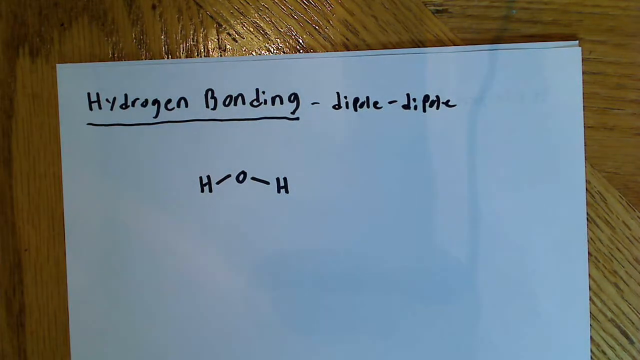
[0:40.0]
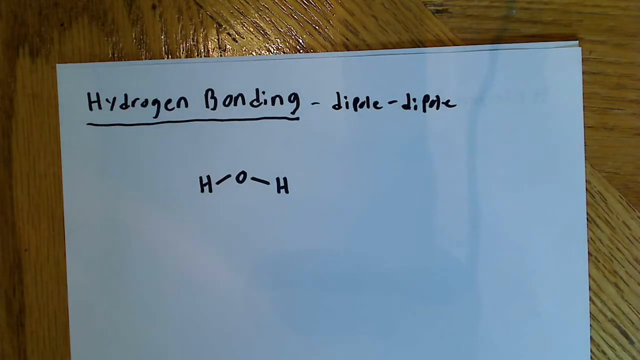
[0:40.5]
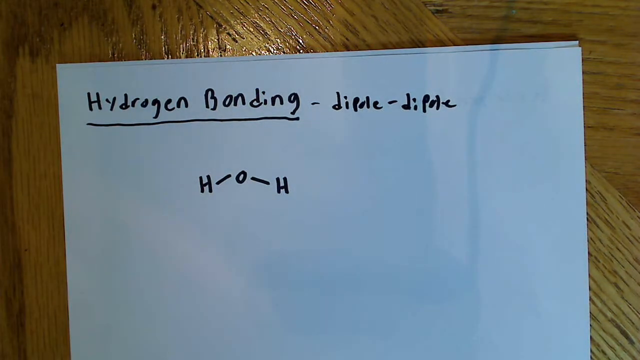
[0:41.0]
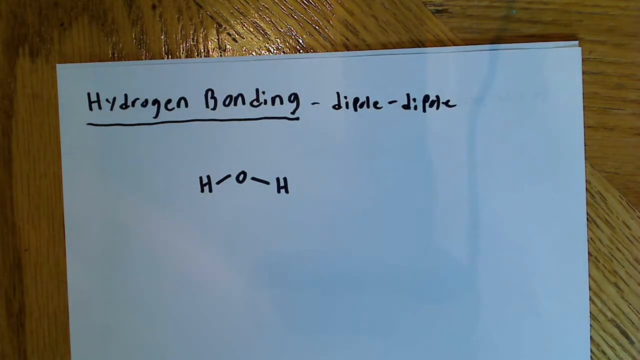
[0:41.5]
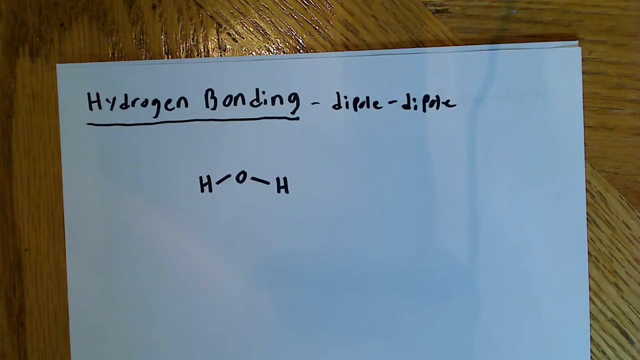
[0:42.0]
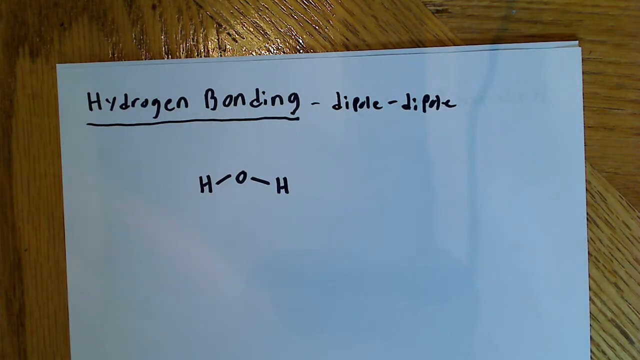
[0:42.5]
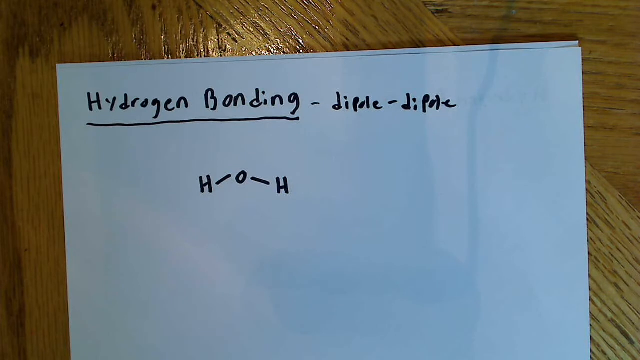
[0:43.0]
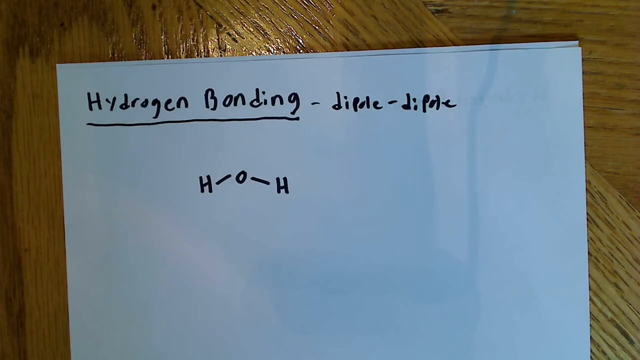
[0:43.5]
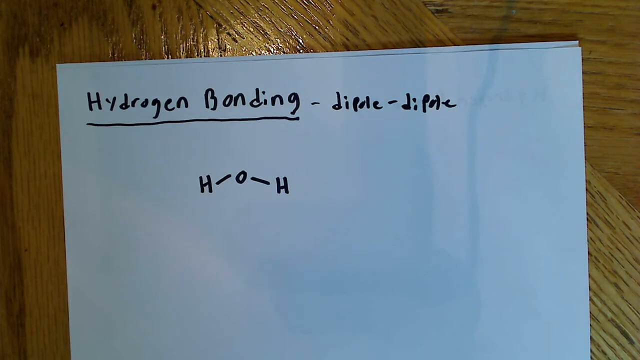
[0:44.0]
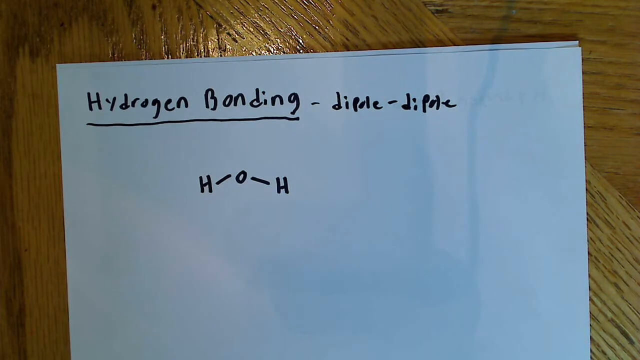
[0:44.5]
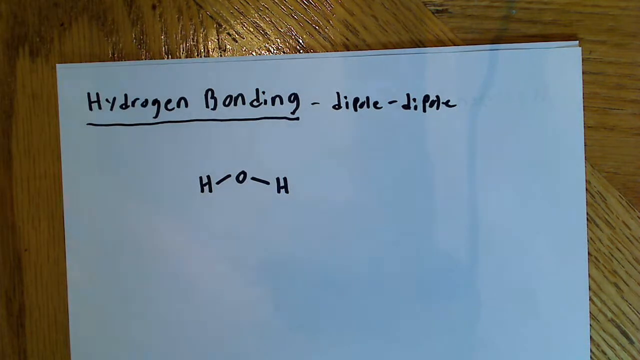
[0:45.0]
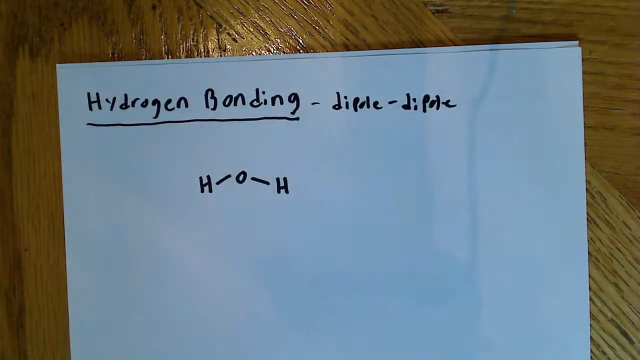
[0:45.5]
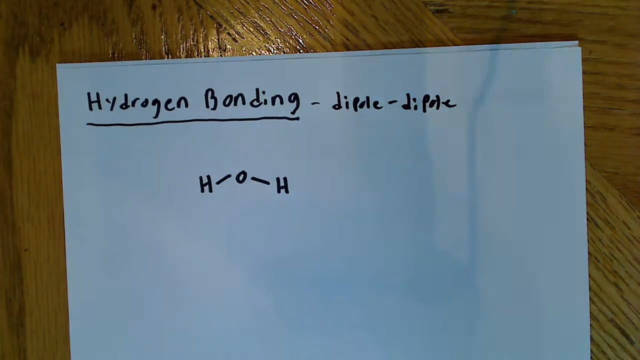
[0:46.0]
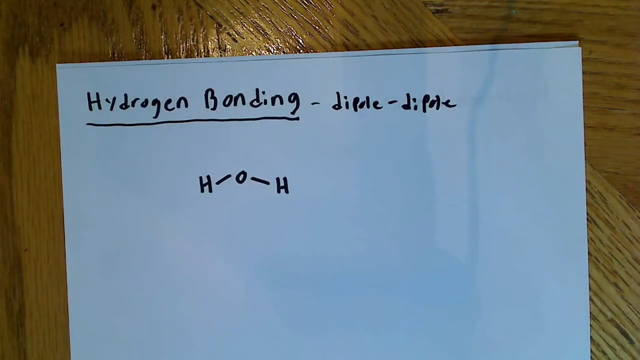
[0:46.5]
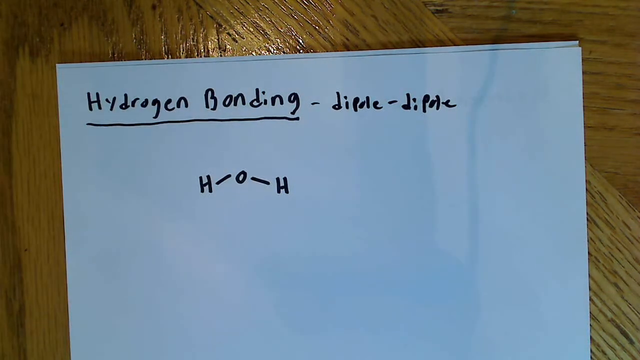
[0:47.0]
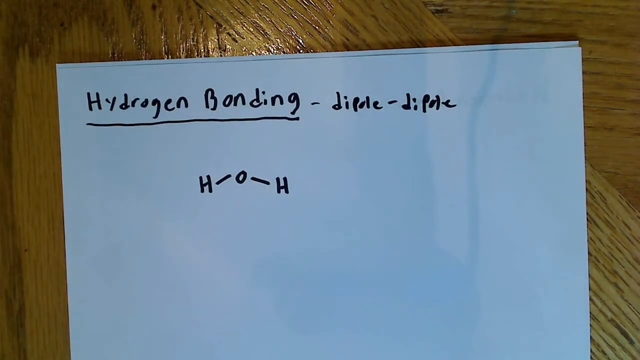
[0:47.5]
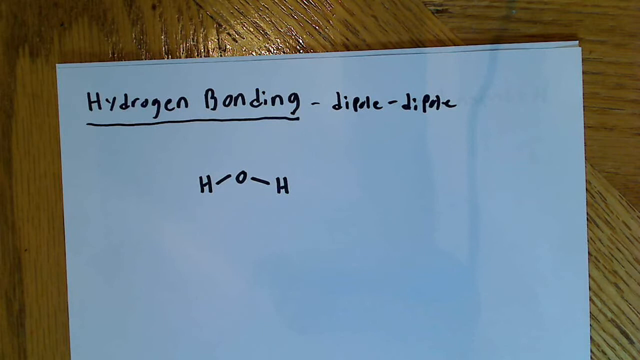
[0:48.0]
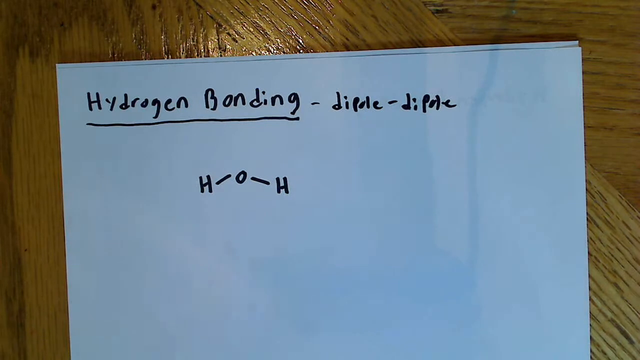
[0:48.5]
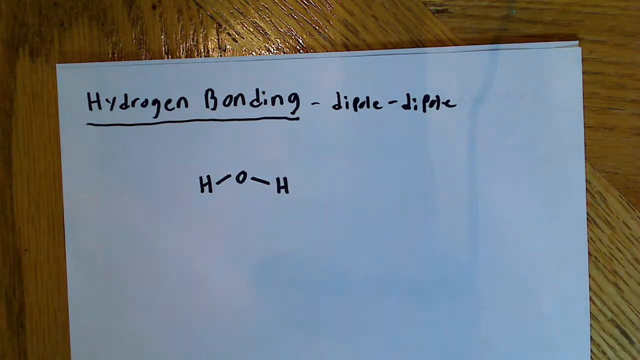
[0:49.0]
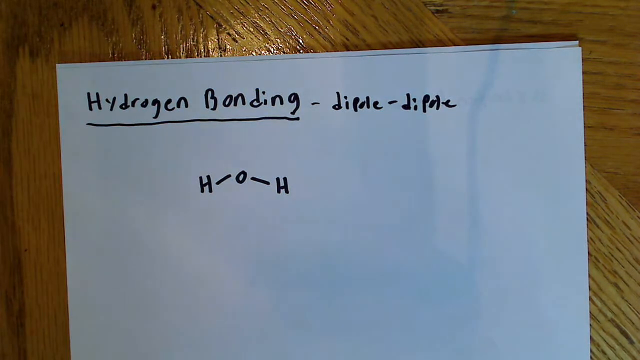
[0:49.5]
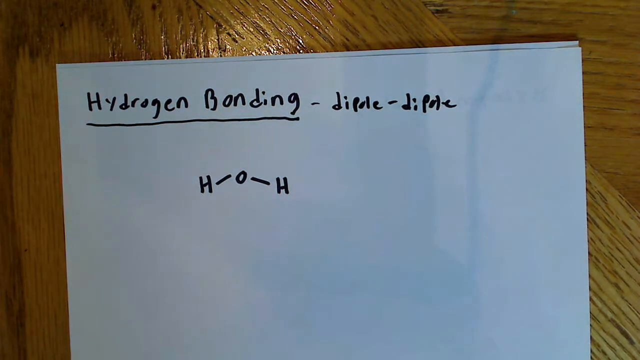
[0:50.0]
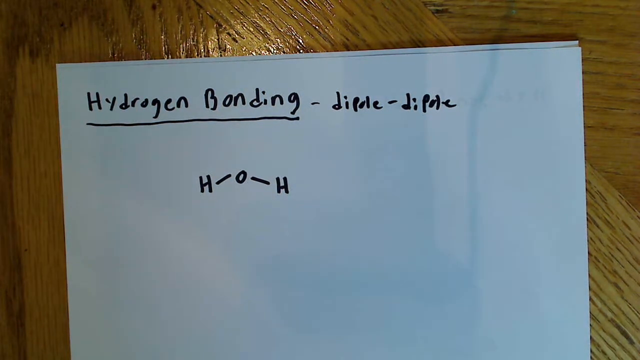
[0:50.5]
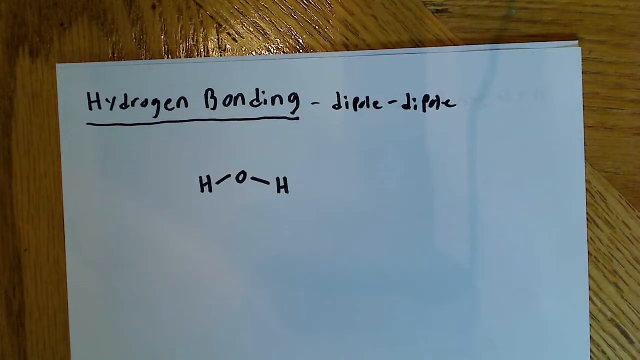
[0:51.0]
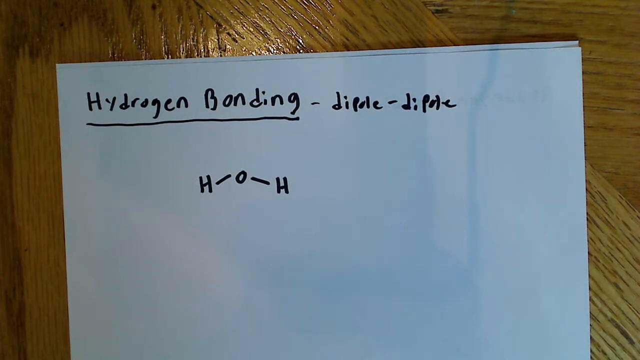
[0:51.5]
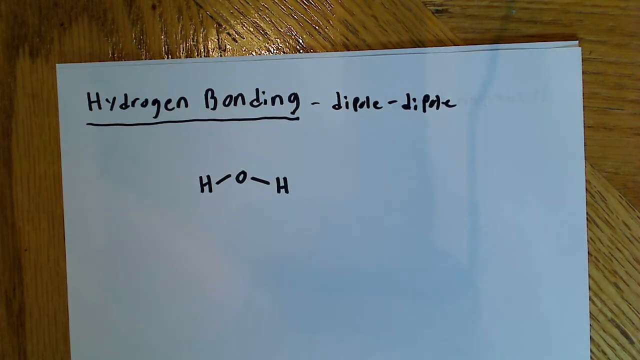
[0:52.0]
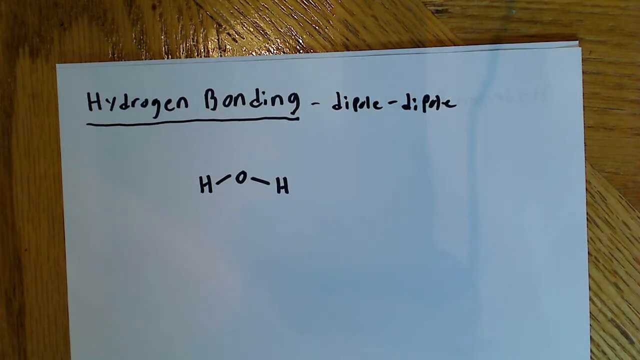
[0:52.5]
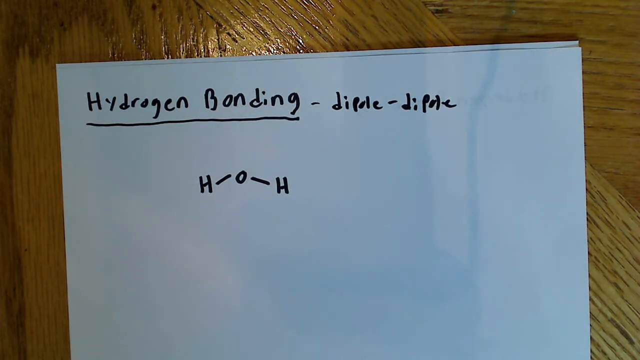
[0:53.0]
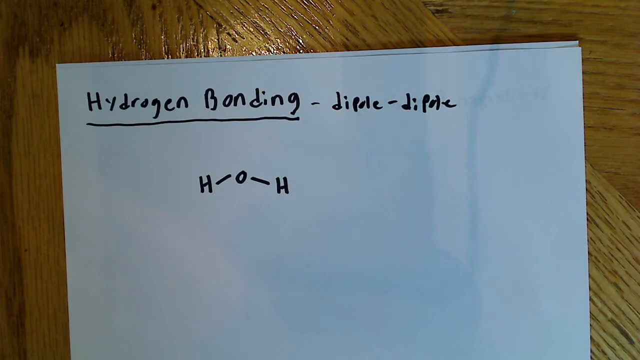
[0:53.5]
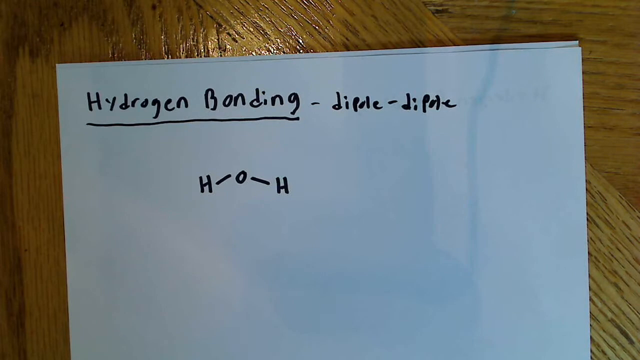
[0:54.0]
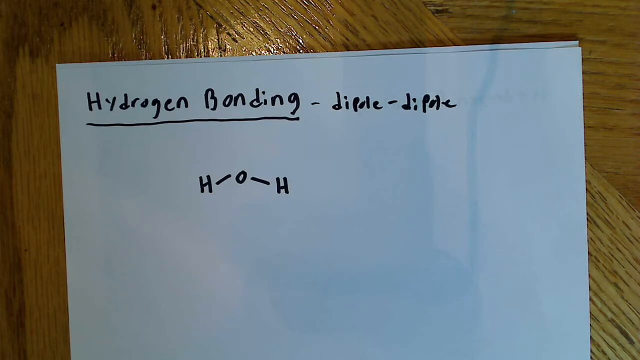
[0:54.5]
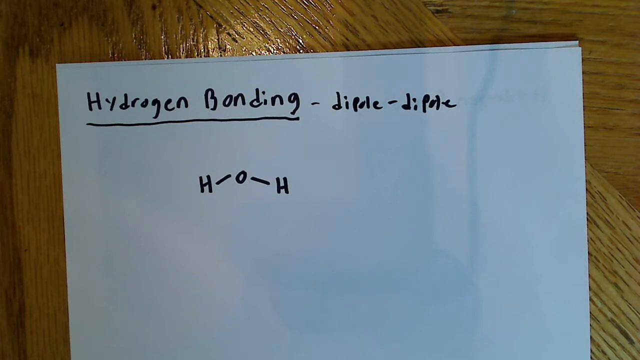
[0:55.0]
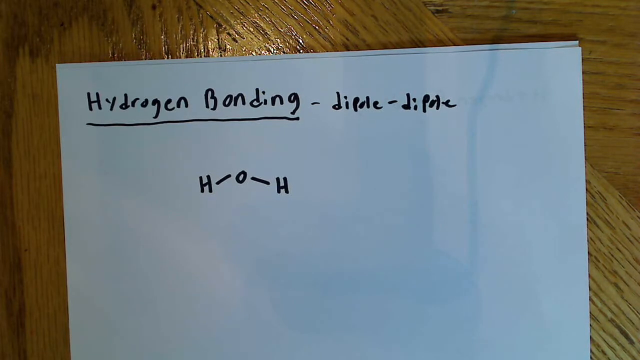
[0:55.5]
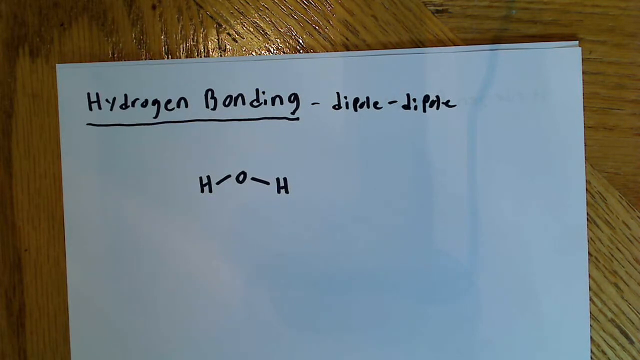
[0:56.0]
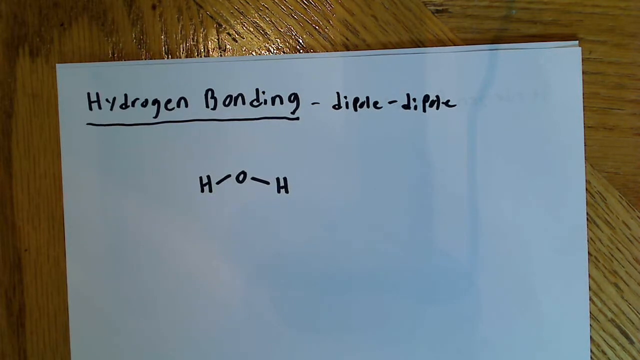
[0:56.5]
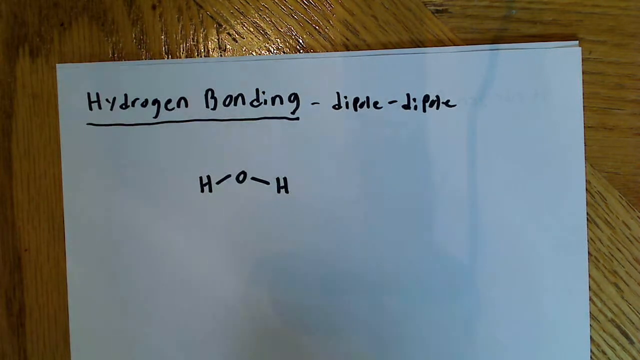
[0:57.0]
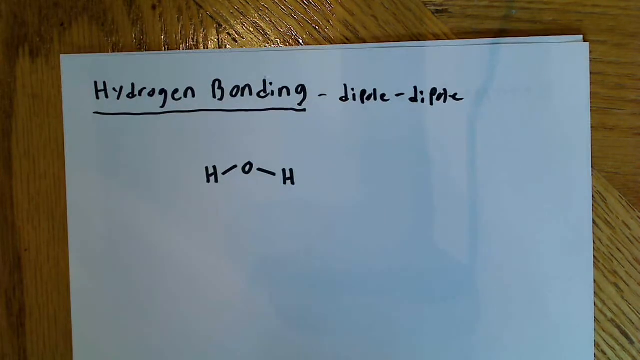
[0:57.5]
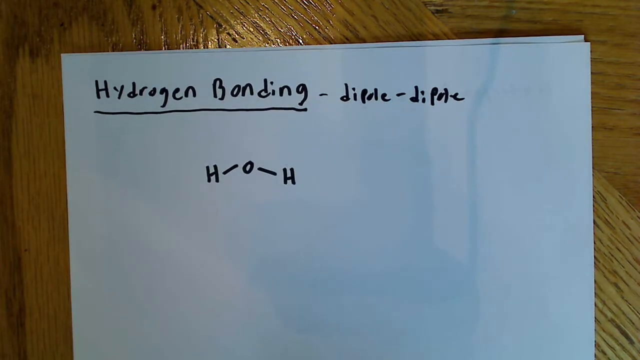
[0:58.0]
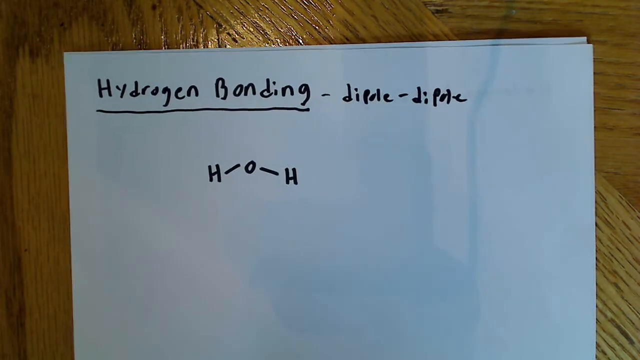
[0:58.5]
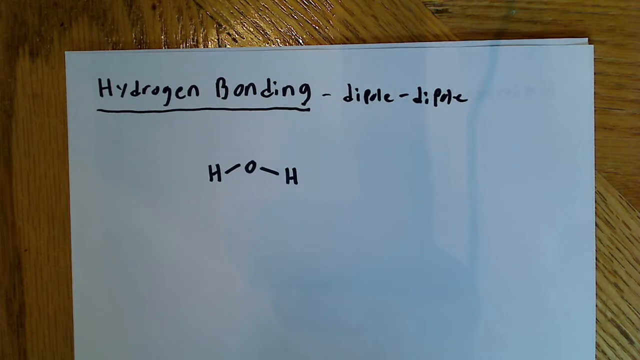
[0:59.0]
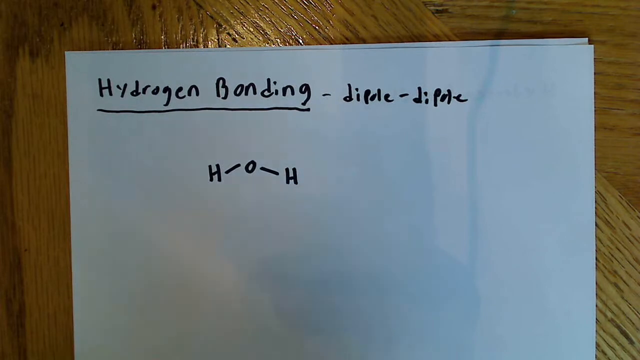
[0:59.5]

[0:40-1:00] Two stacked pieces of white printer paper lie face up on a heavily grained wooden table with a slightly shiny finish; only the top sheet is visible. At the top, "hydrogen bonding" is written in Sharpie with the H and B capitalized and the rest lowercase, and it is underlined. To the right of it are a dash, the word "dipole," another dash, and the word "dipole" again. Underneath "bonding" is a diagram with a capital H on the left, a slight dash going up and to the right, a capital O in the center, a slight dash going down and to the right, and another capital H. Diffused light comes from the right side of the screen, and something moving casts slight shadows across the paper. There might be the shadow of a wire or something just right of "dipole" at the top of the page, running down toward the bottom of the screen, and the shadows sort of increase toward the bottom. At the very end, a blurry hand comes in at the bottom and the paper shakes a little, as if someone is trying to straighten it.